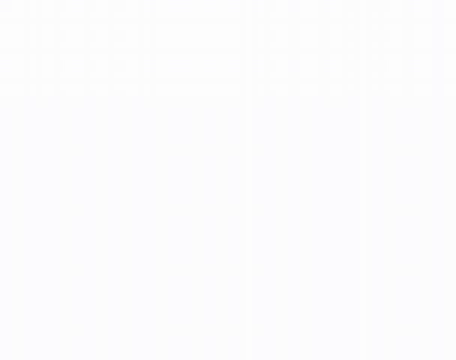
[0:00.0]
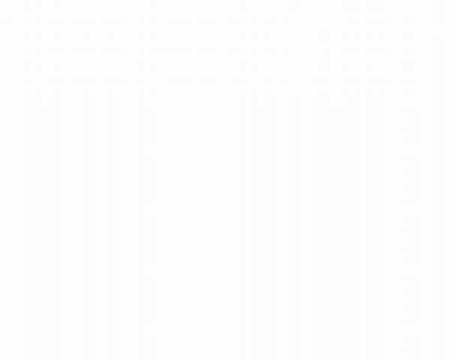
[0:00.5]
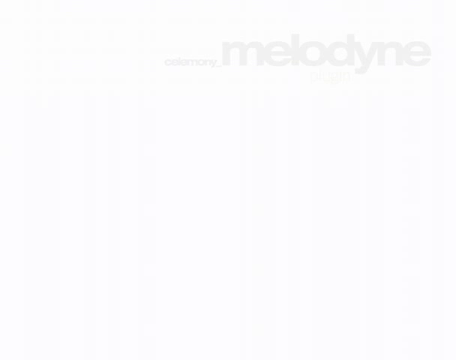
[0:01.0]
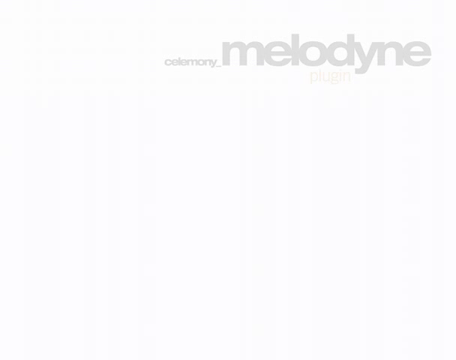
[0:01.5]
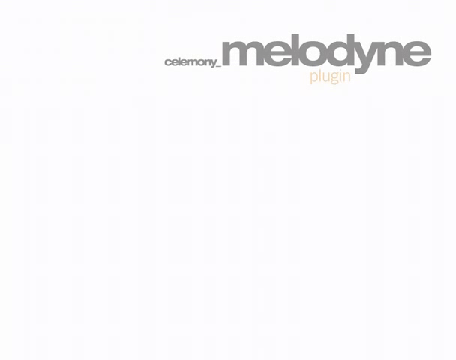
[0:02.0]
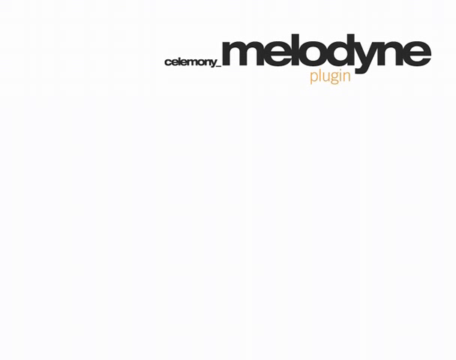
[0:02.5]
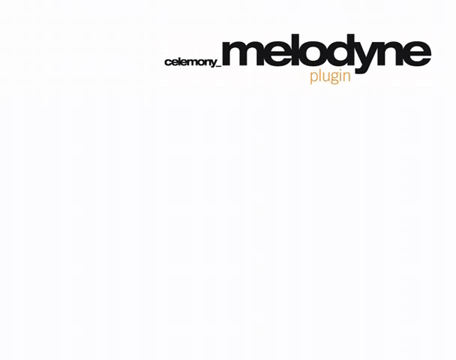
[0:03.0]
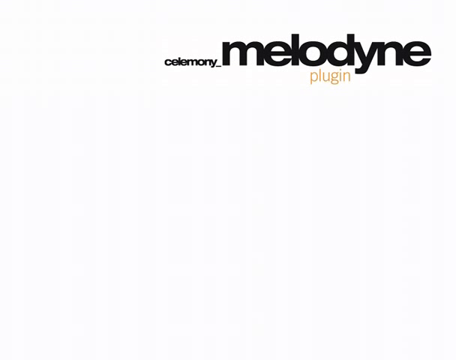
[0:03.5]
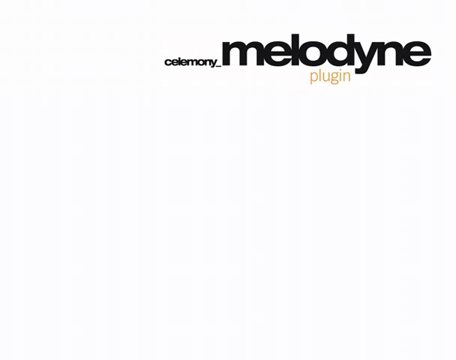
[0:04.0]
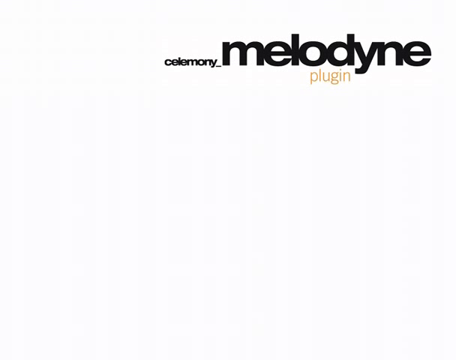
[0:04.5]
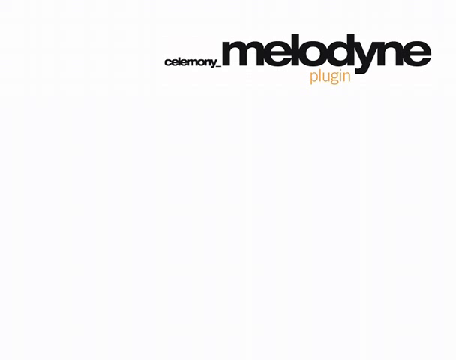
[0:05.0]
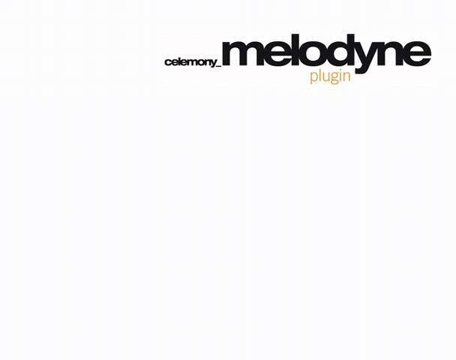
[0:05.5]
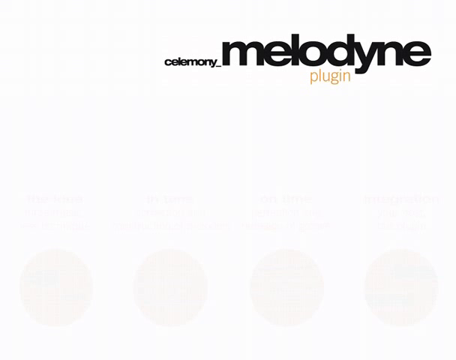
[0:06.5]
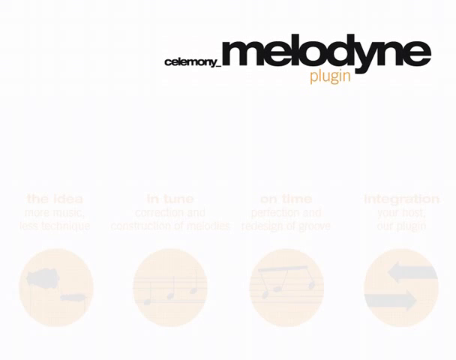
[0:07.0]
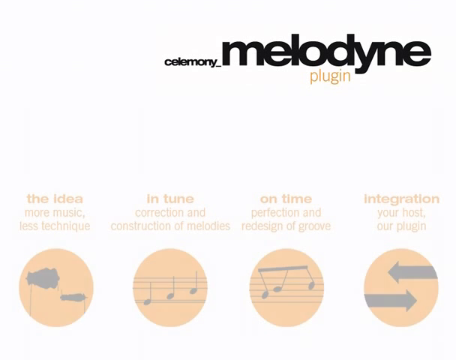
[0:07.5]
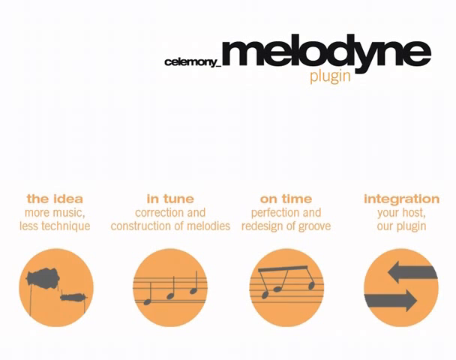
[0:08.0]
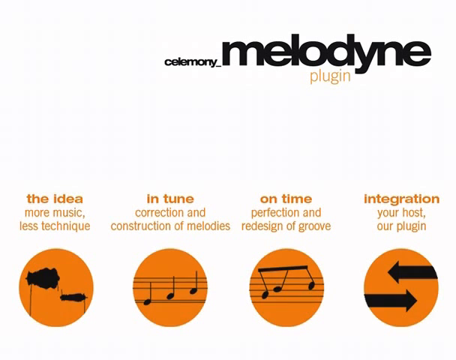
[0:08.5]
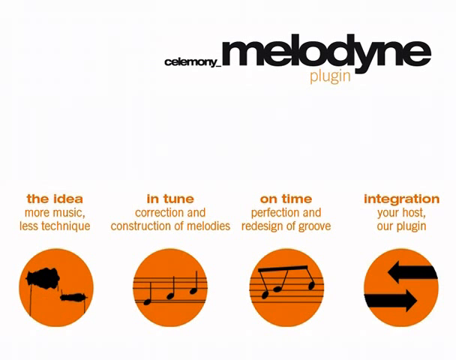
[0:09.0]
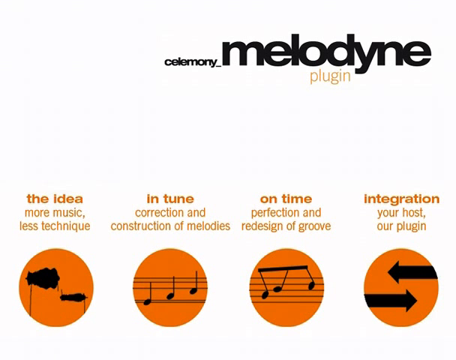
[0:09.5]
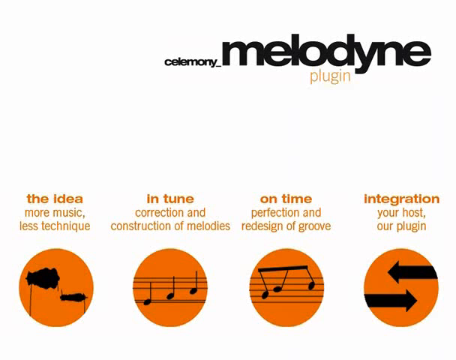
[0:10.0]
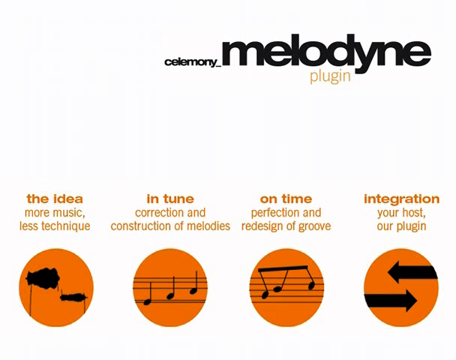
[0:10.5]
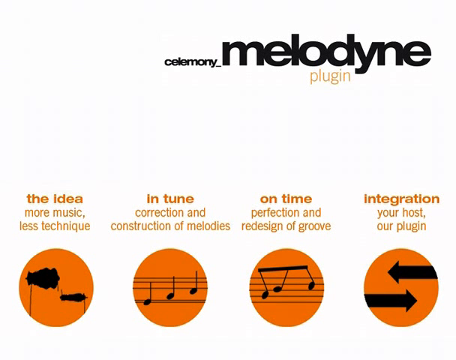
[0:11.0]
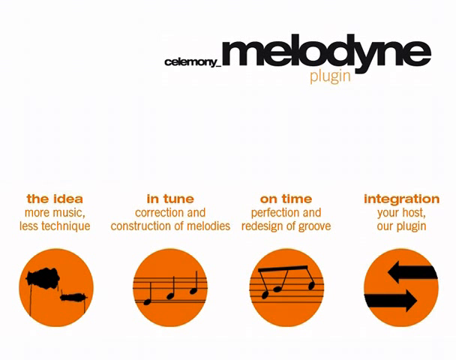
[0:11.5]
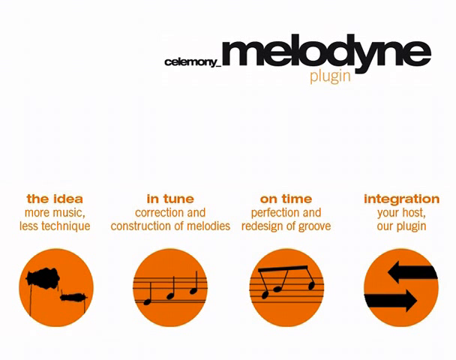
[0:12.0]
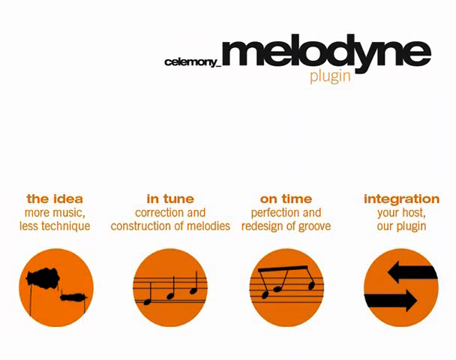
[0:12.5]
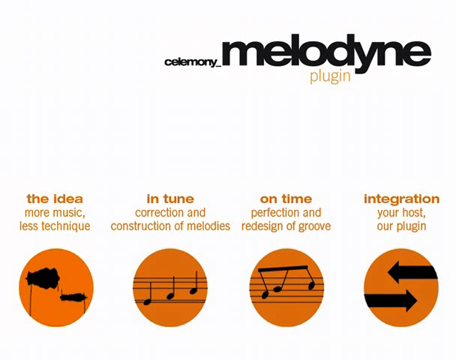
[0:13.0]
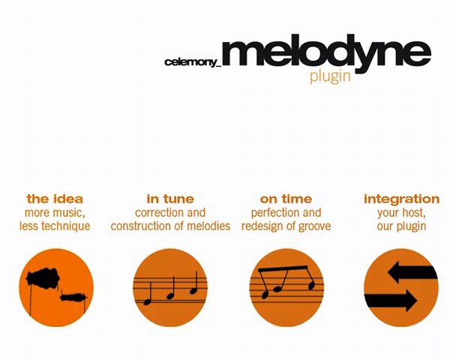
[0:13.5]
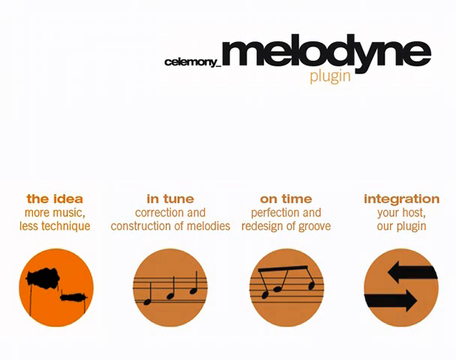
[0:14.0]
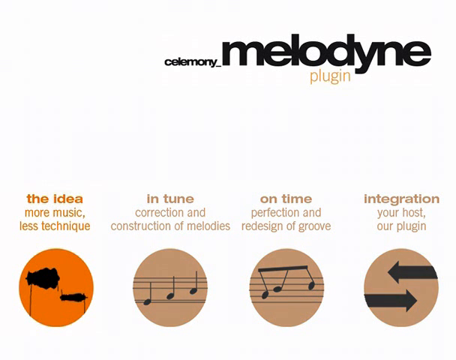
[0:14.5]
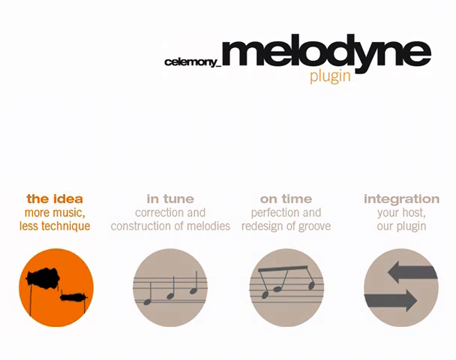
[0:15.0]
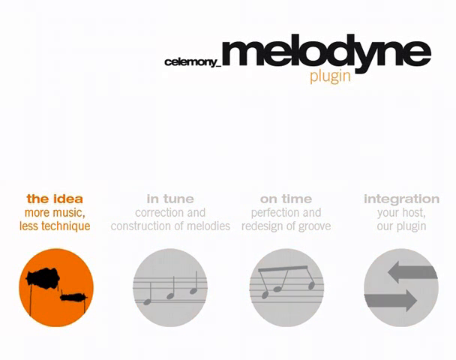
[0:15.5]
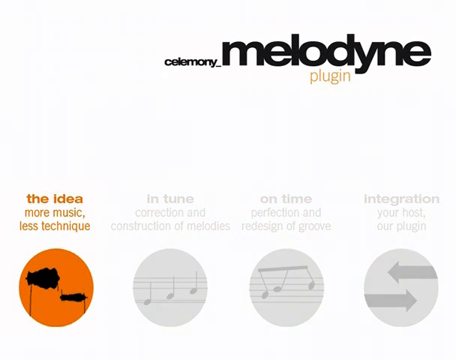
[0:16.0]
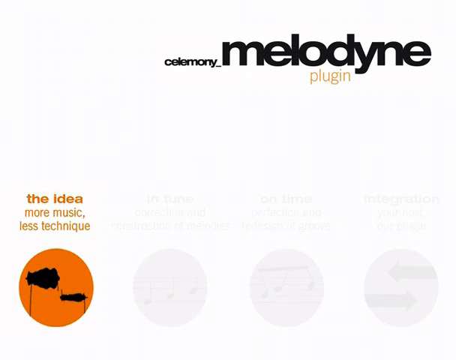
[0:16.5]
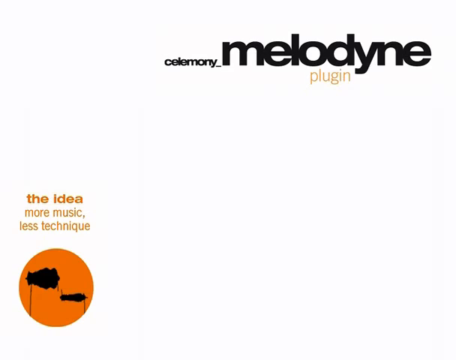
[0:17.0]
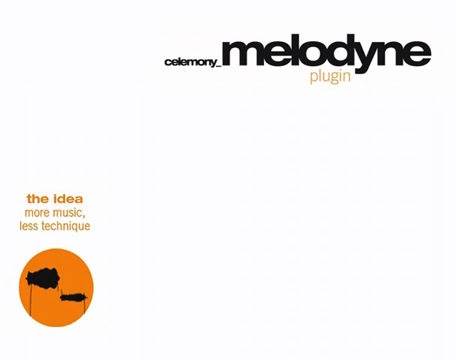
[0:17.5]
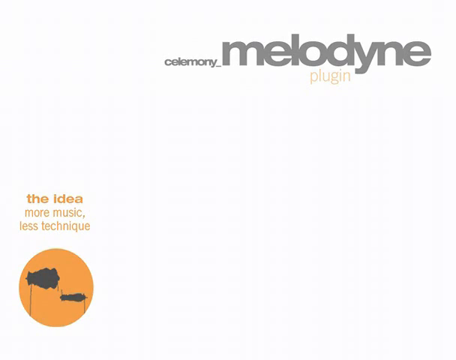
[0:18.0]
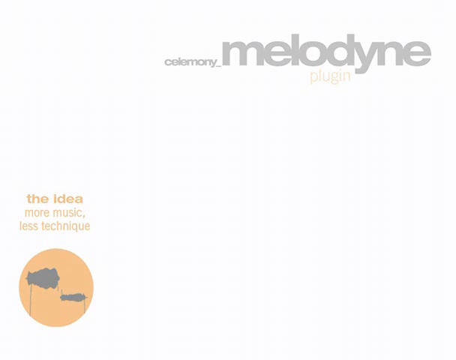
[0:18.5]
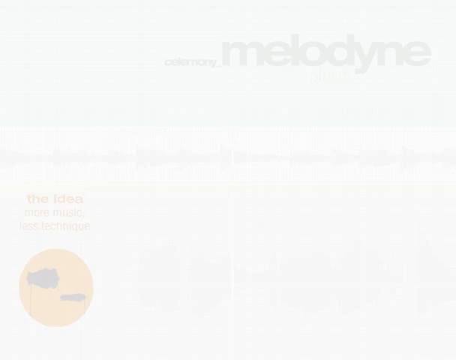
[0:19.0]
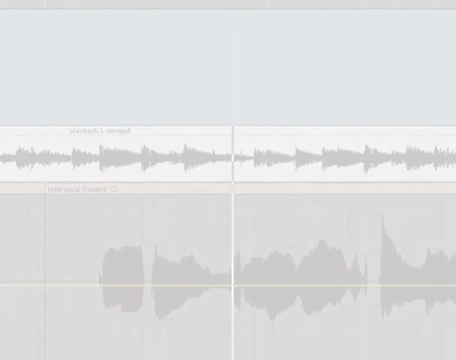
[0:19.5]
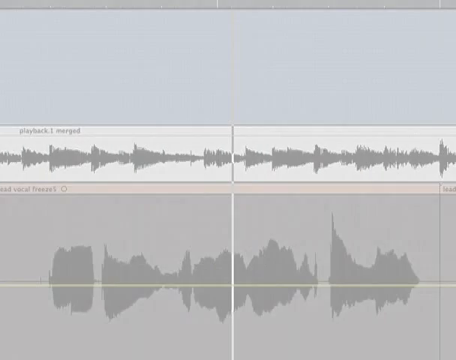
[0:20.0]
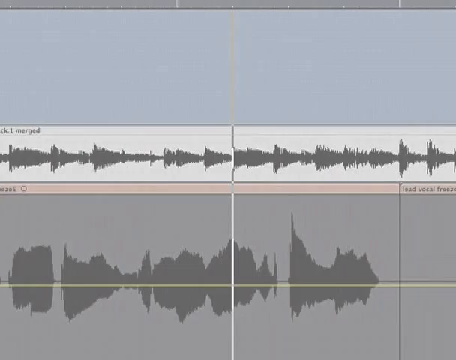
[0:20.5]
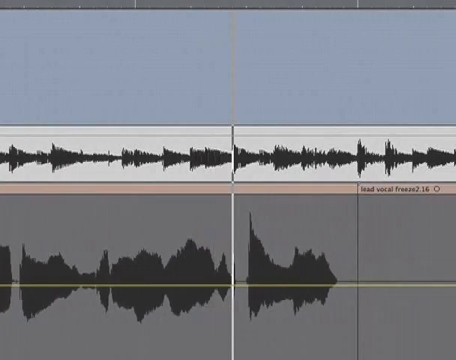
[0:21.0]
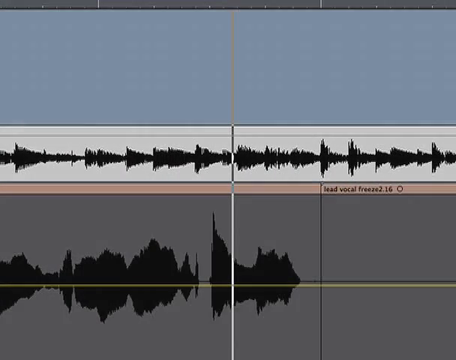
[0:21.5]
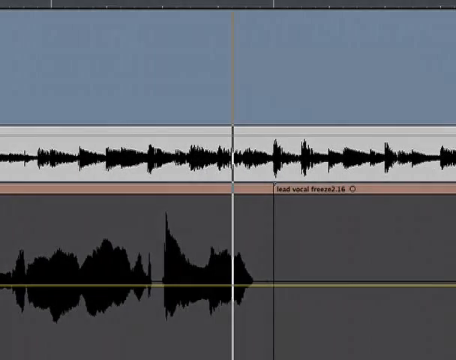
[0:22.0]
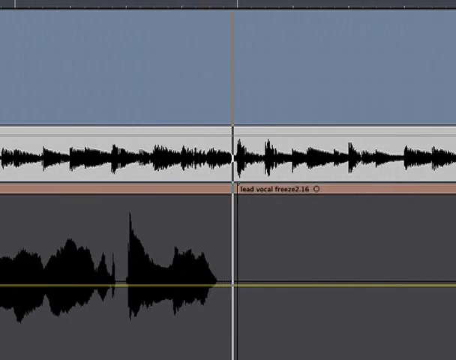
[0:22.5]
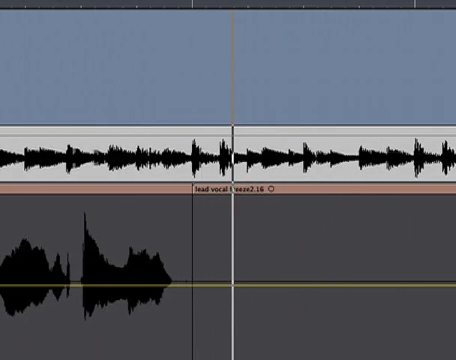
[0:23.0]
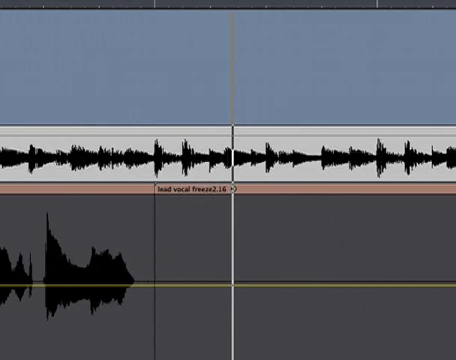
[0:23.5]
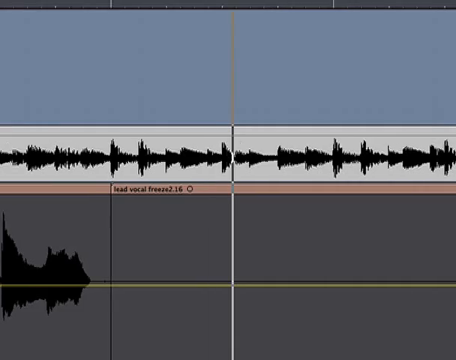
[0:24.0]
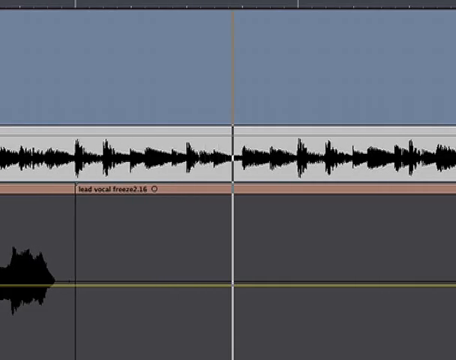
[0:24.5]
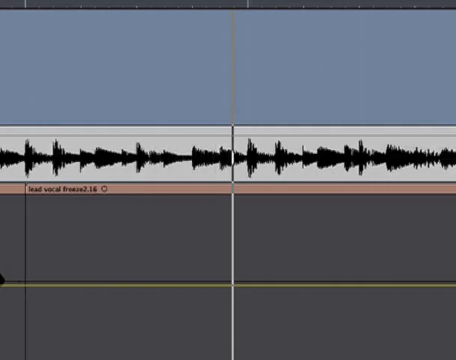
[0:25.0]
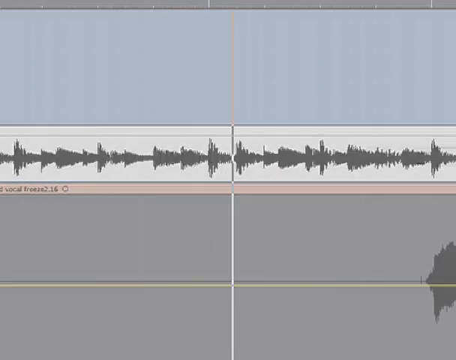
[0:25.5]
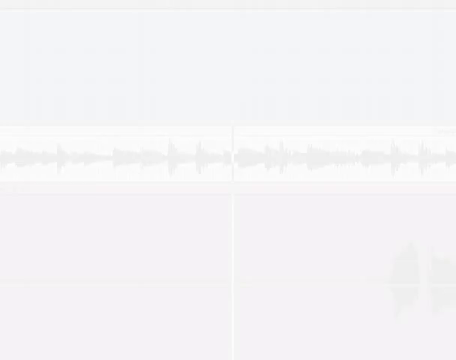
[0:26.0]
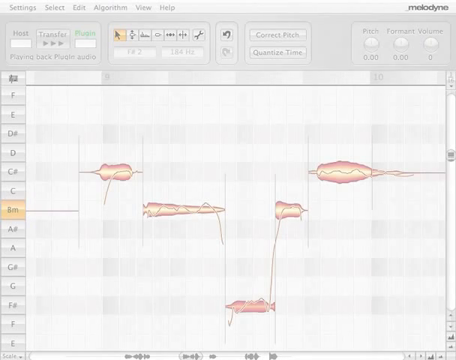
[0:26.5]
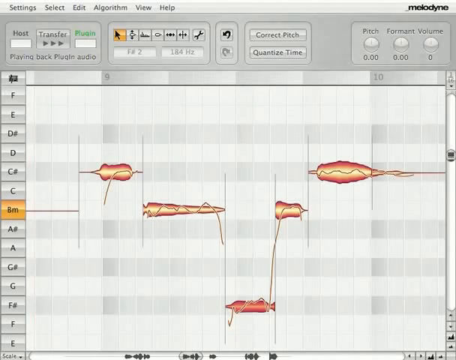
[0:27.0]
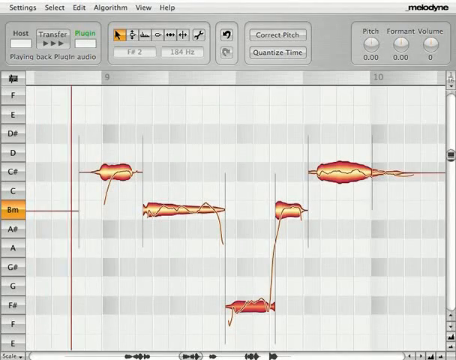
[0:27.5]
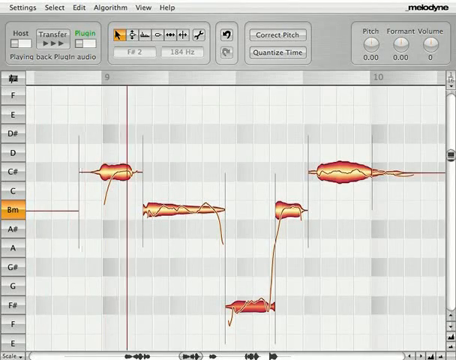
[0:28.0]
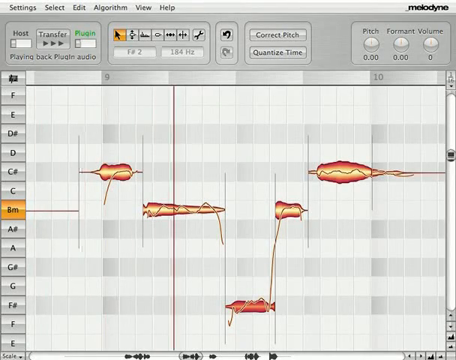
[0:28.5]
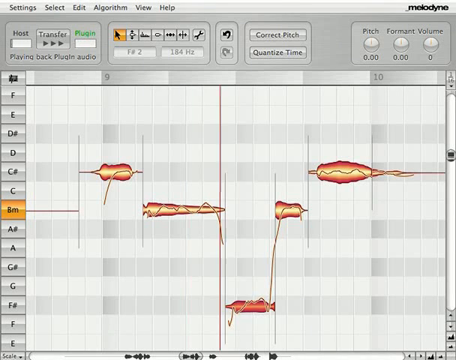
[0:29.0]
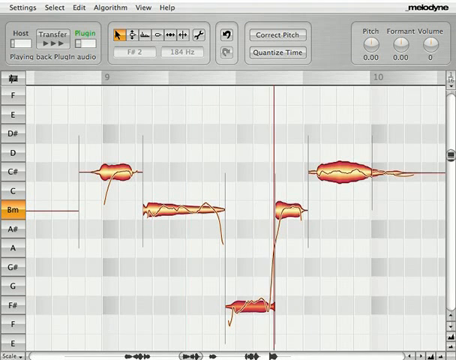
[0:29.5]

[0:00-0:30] The video opens with text on the screen that looks like a logo, reading "Melodyne plug-in." Icons appear at the bottom of the screen, with titles above them including "the idea," "on time" and "integration." The last three icons disappear, leaving "the idea more music less technique." The scene switches to a screen with radio frequency signals moving from the right side of the screen to the left. A settings window for music software called Melodyne then appears; it looks like it is running on a Windows system. Along the top are the buttons settings, select, edit, algorithm, view and help.